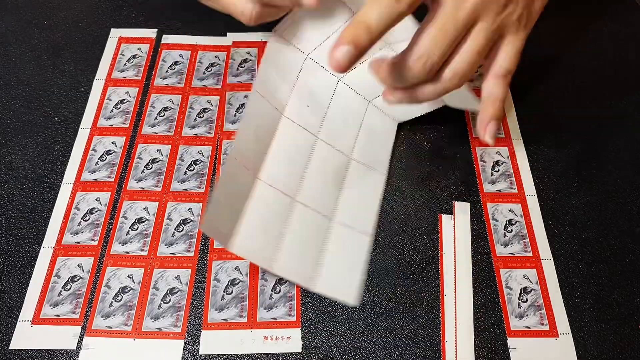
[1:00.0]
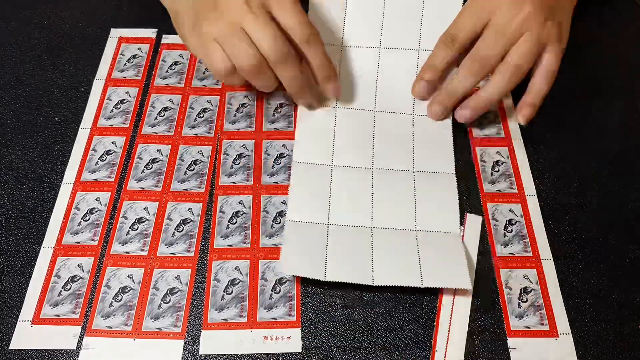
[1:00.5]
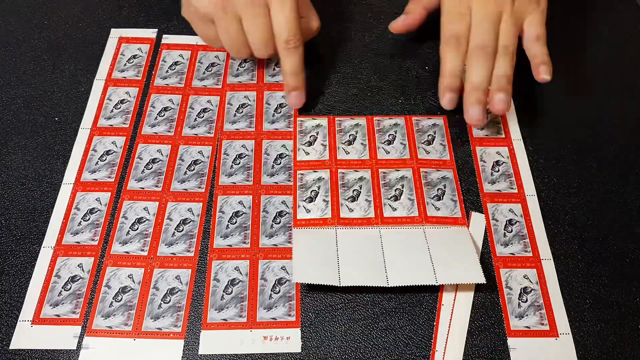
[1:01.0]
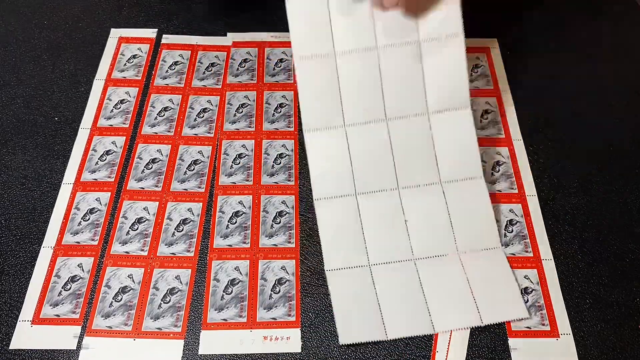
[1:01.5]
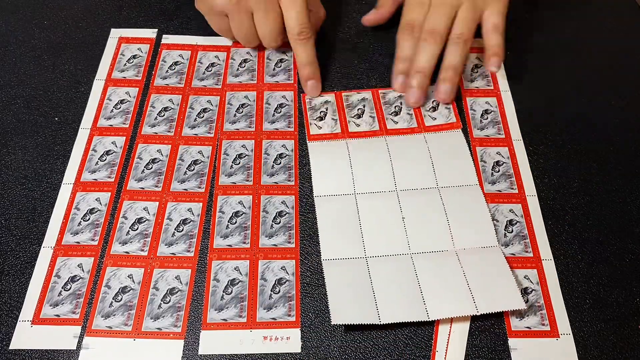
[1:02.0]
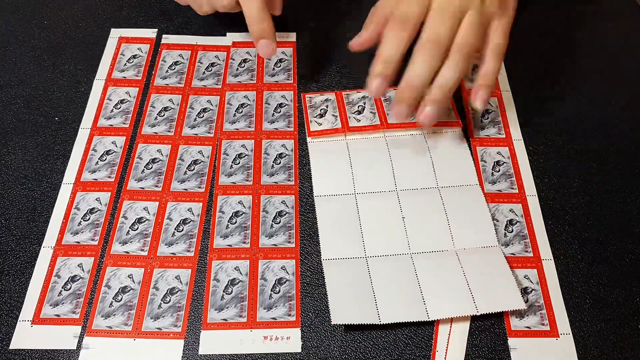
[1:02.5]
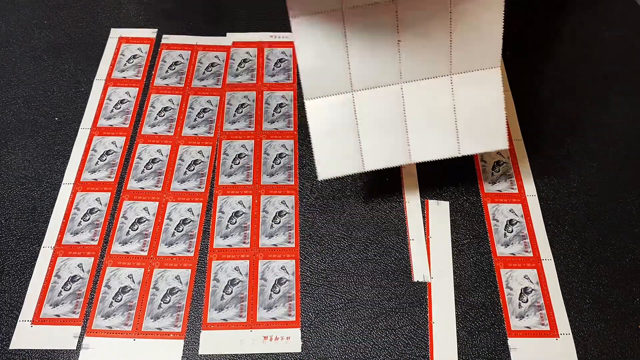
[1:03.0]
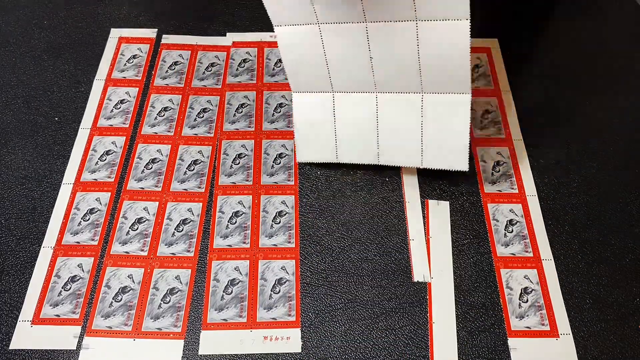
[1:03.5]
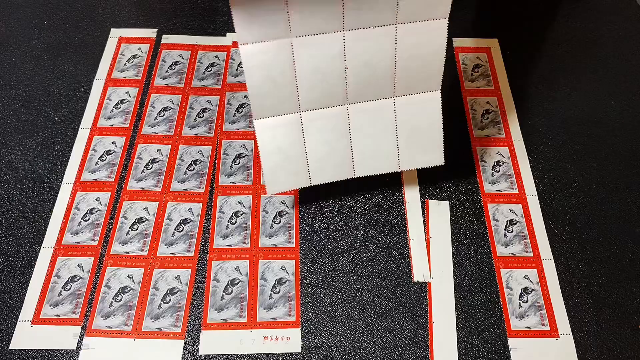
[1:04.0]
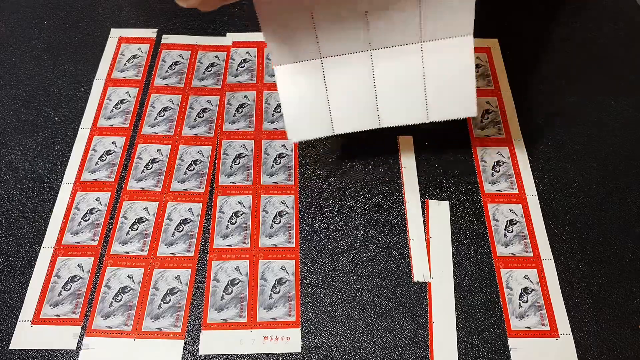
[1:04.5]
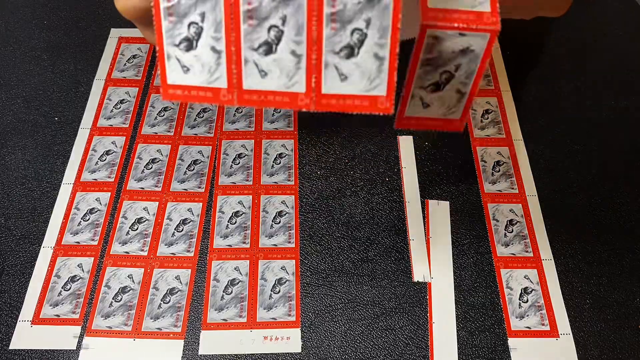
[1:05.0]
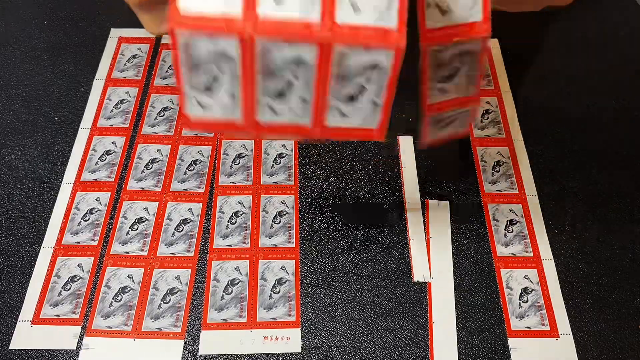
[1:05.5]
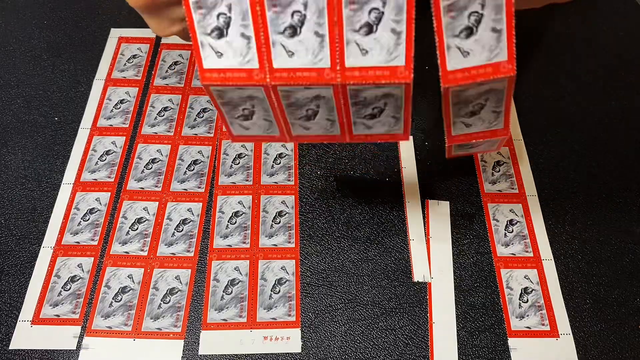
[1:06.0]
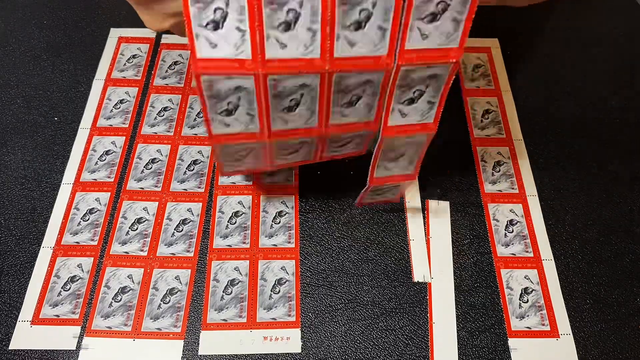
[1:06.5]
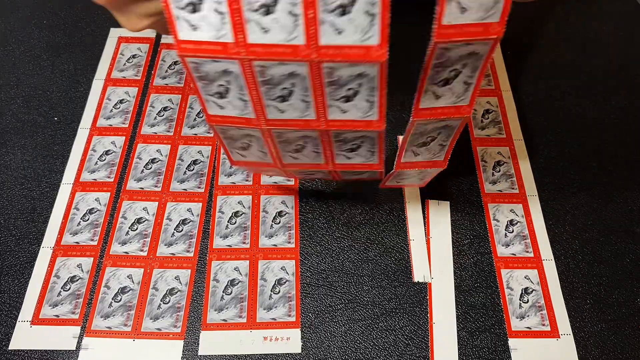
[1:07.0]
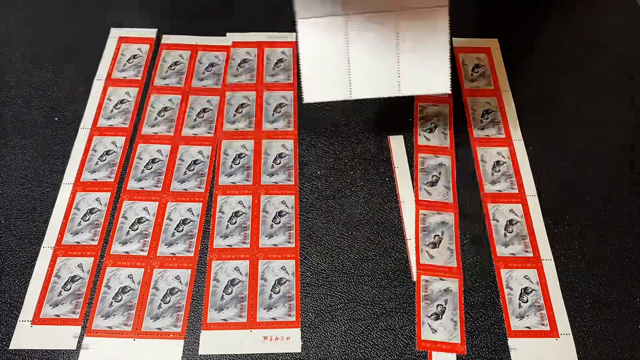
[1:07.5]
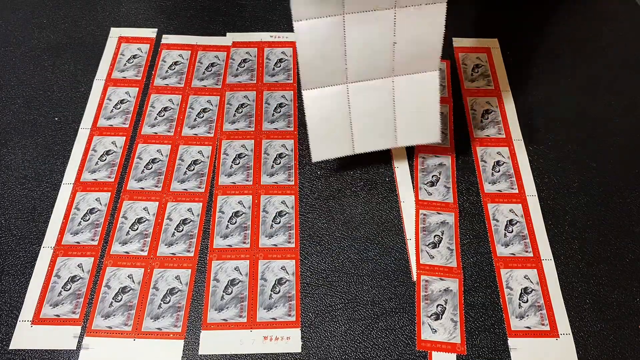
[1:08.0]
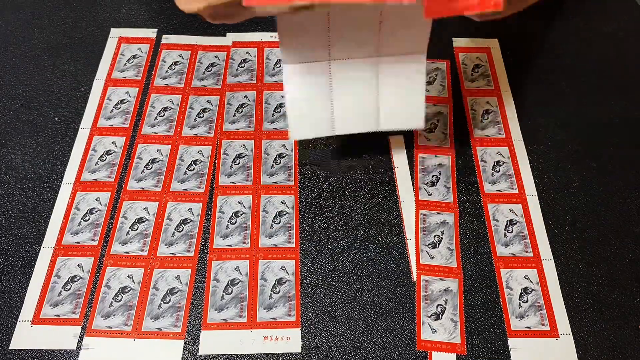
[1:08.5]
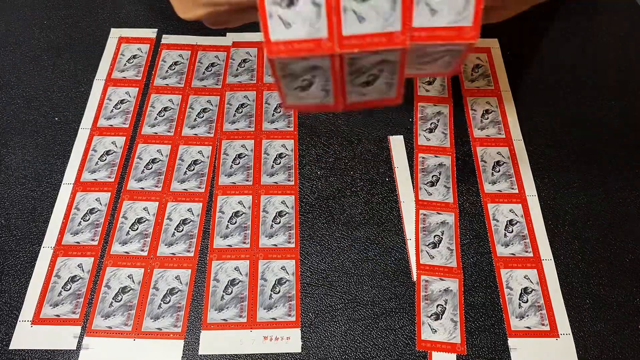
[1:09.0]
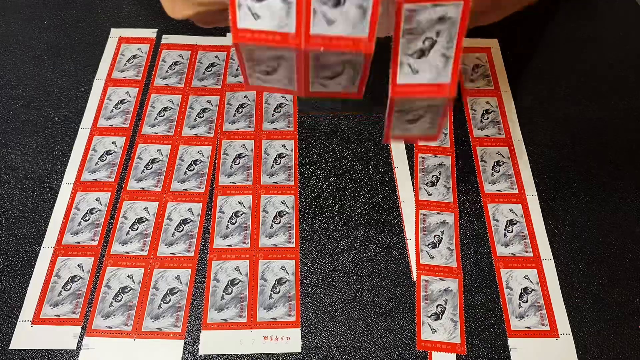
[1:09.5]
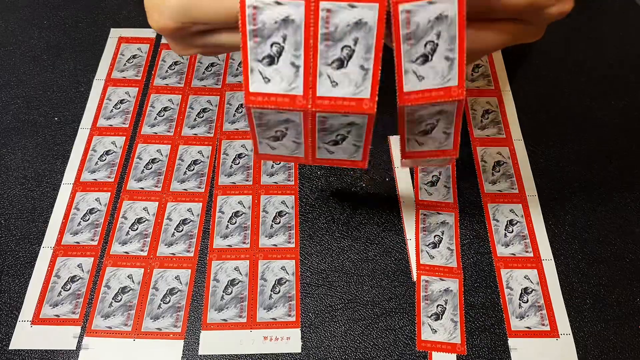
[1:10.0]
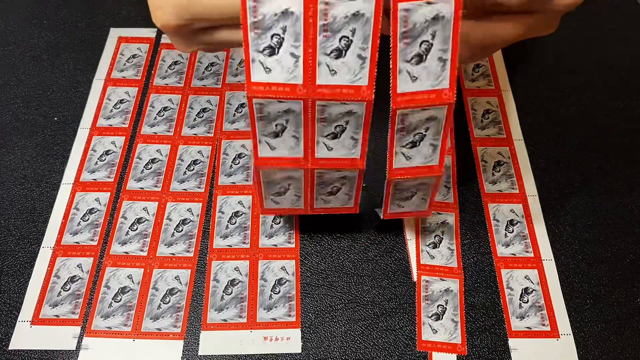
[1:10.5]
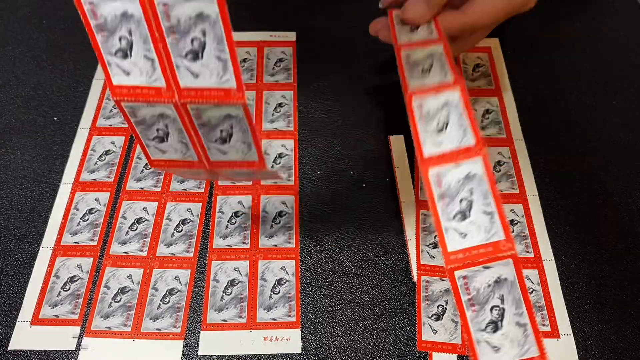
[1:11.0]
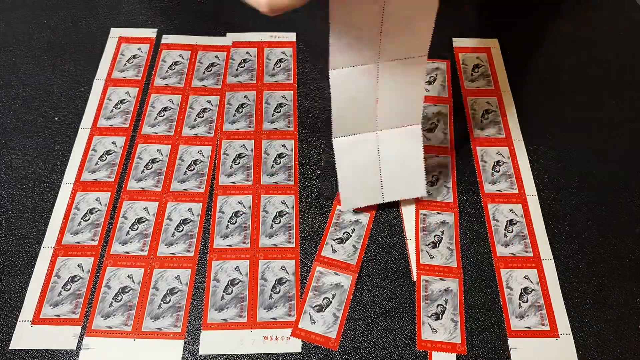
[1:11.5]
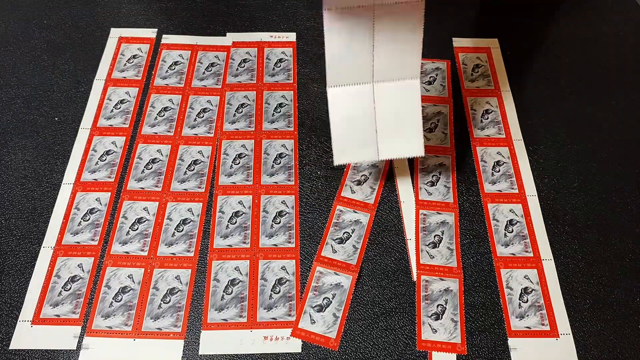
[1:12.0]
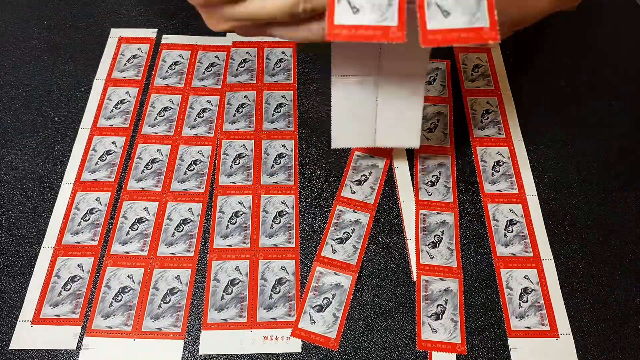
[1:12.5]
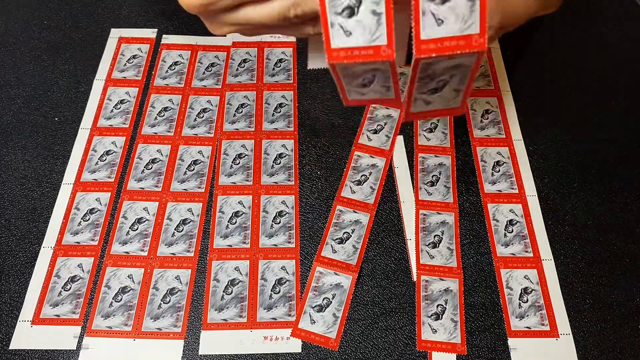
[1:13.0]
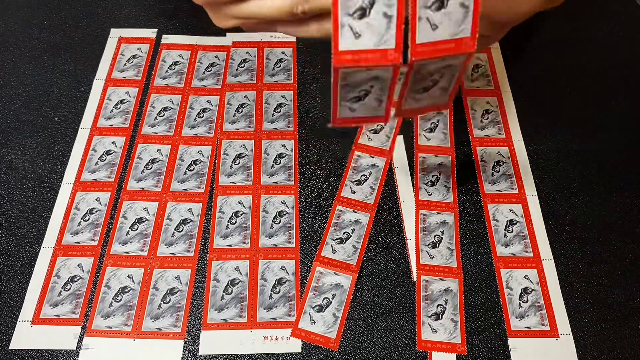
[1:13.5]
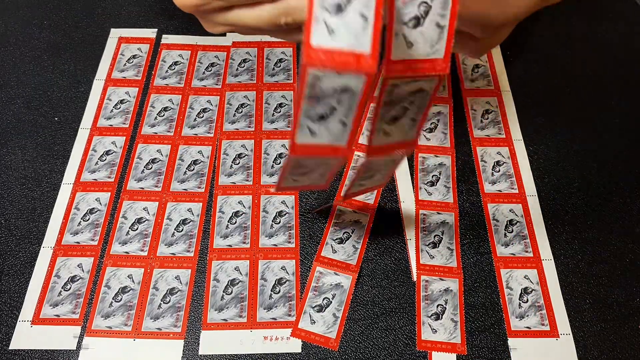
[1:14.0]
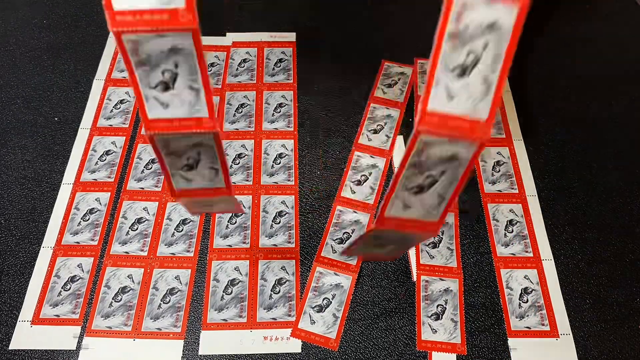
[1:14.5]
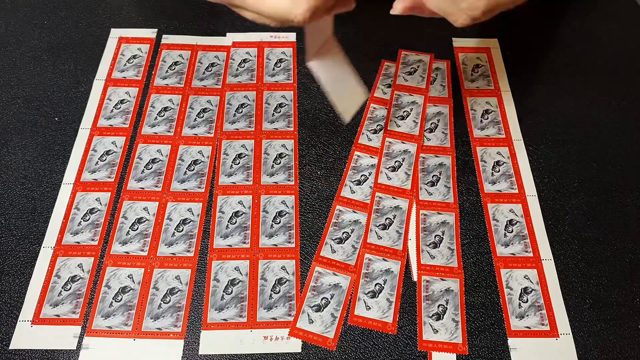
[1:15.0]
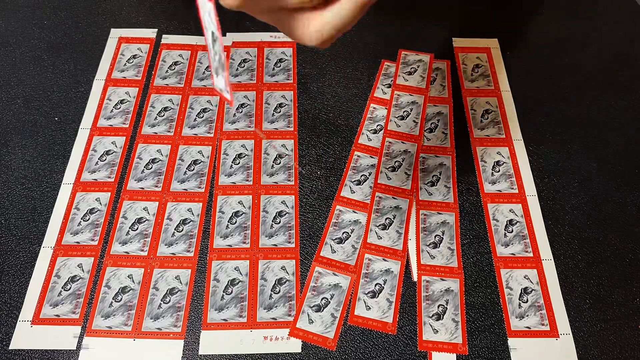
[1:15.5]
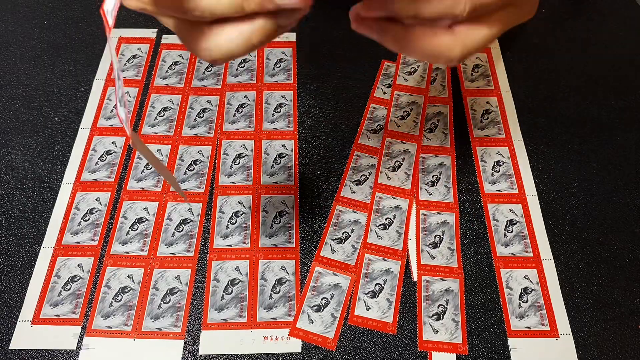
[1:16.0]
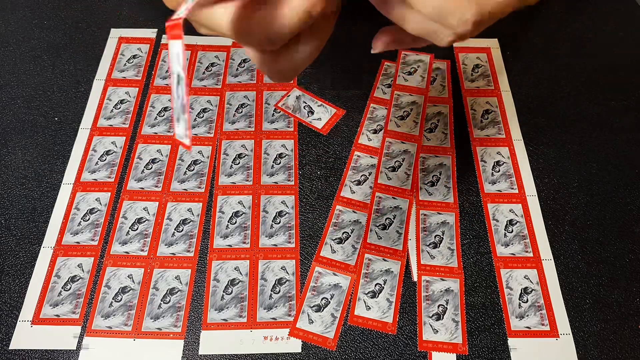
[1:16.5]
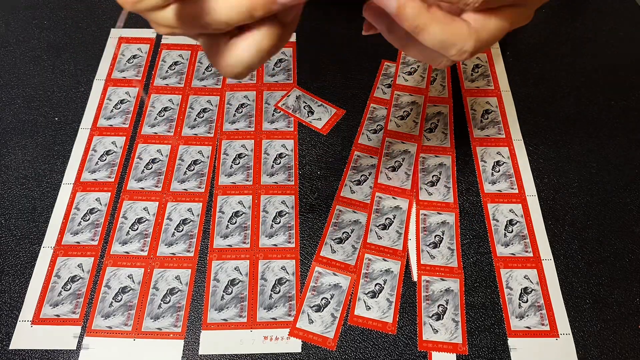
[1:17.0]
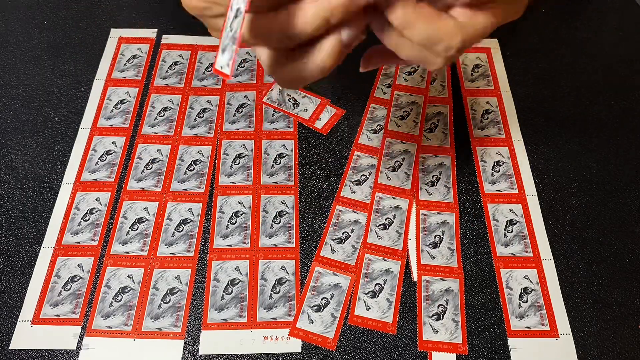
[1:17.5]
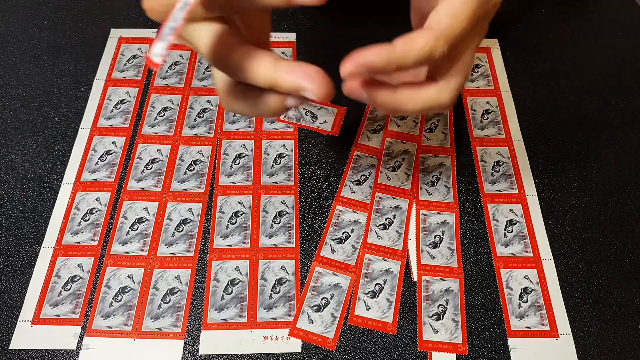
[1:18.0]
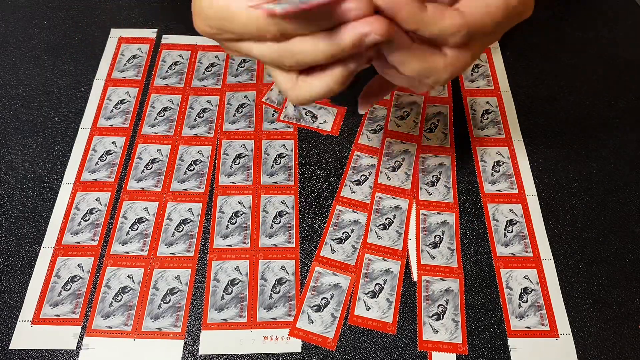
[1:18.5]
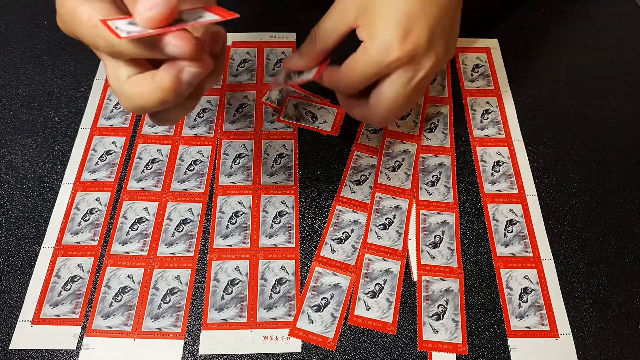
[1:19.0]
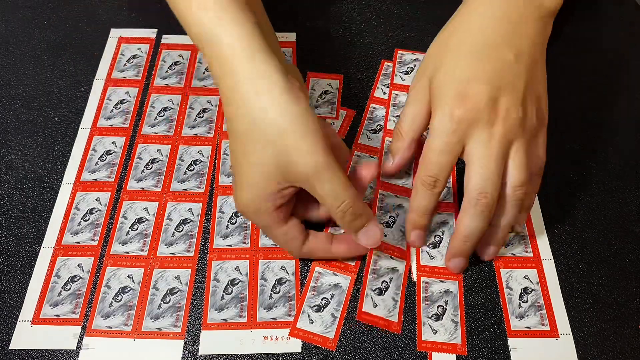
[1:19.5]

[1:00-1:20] The man continues to fold the 4 by 5 piece of paper, creasing it one by one: first row, second row, third row and fourth row, then first column, second column, third column and fourth column, so that it is creased between every section. He then cuts out or rips off with his hands the rightmost section and places that column on the black surface. He takes the second column, rips it off similarly and places it on the surface. He also separates the remaining 2 by 5 piece and places the parts on the surface so that each is a strip of paper. He then takes one of the columns and starts splitting it into individual pieces.